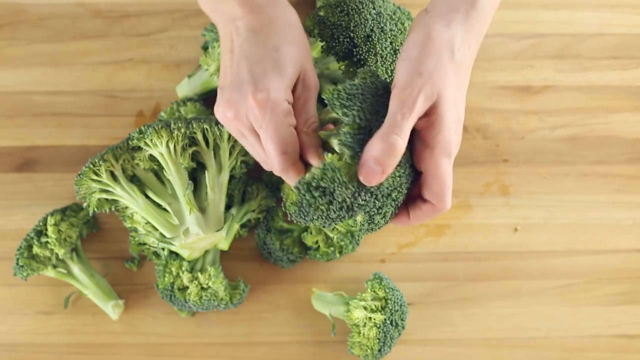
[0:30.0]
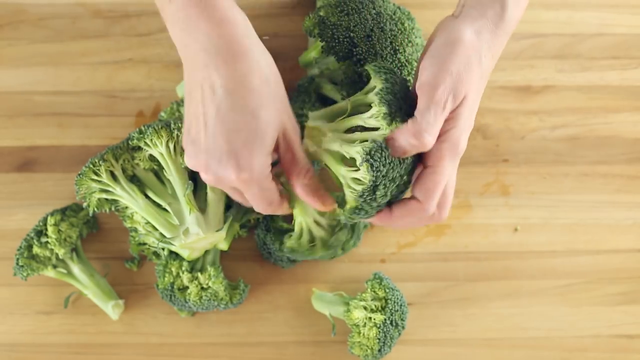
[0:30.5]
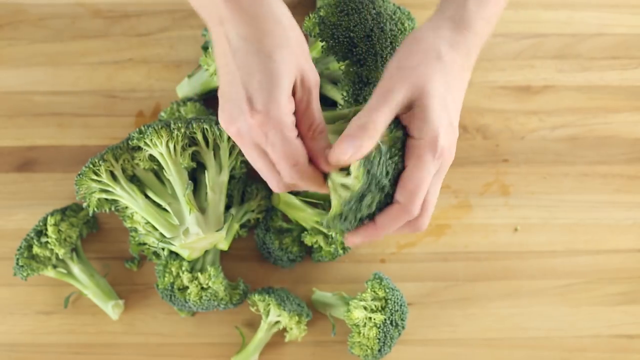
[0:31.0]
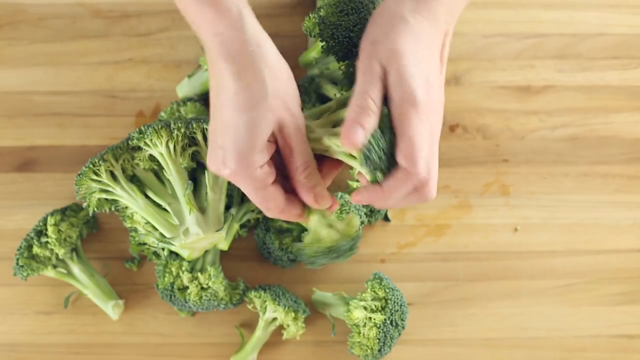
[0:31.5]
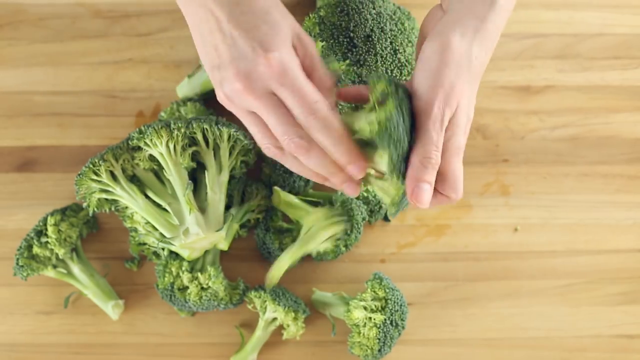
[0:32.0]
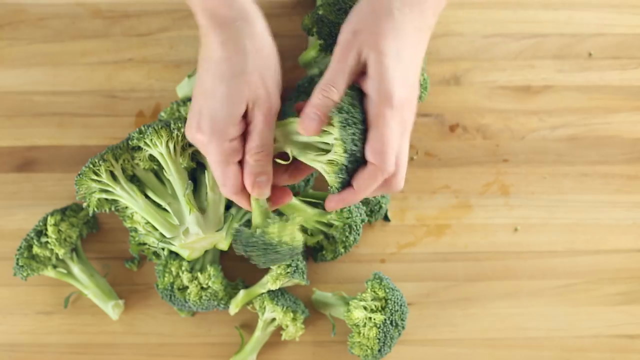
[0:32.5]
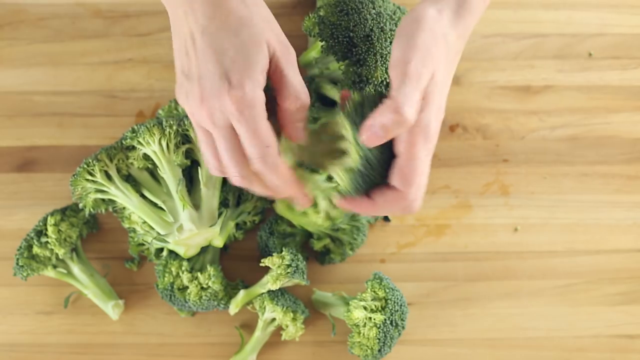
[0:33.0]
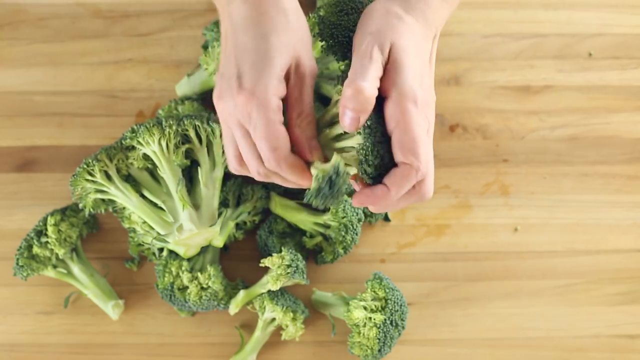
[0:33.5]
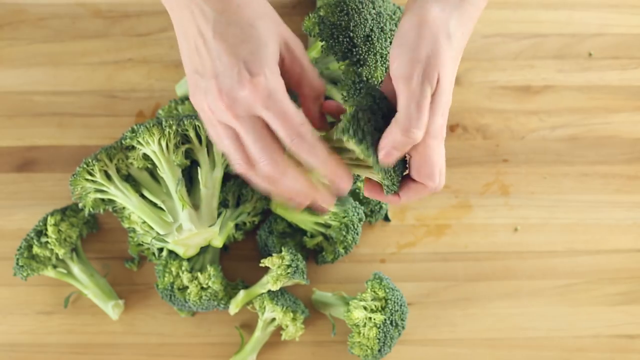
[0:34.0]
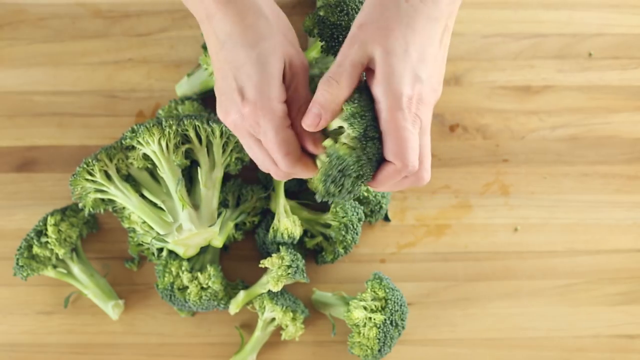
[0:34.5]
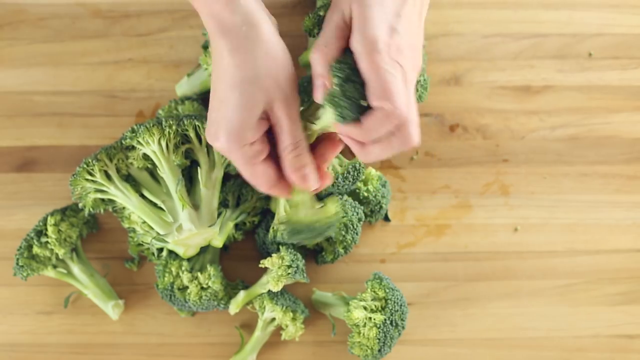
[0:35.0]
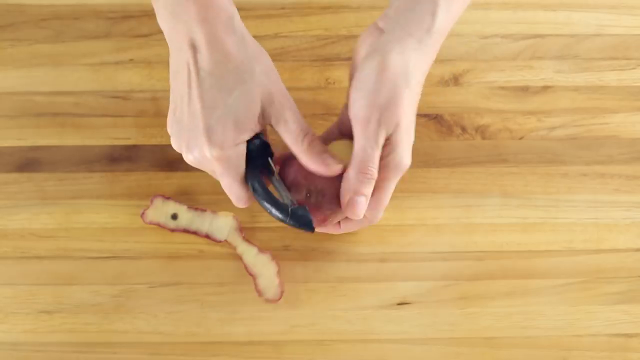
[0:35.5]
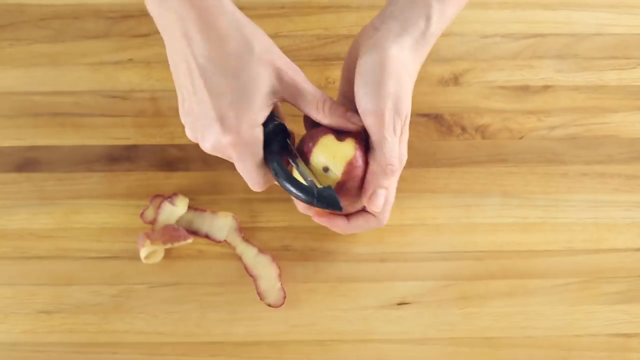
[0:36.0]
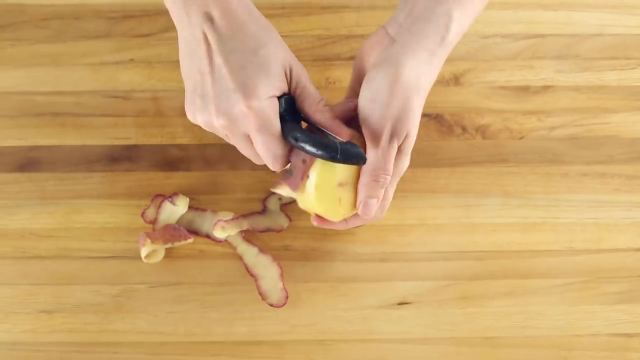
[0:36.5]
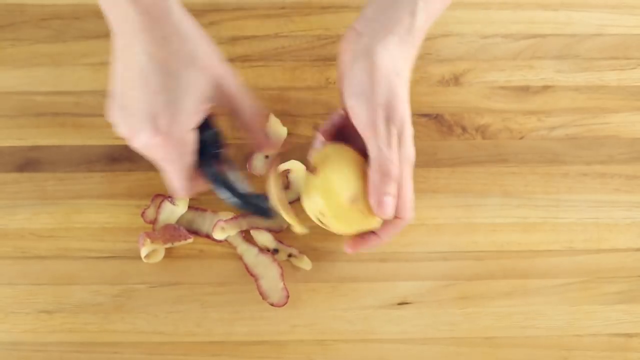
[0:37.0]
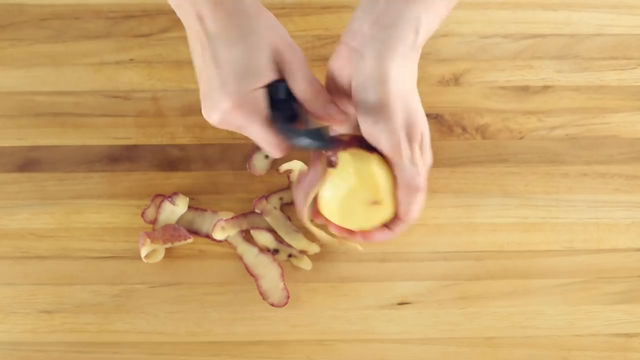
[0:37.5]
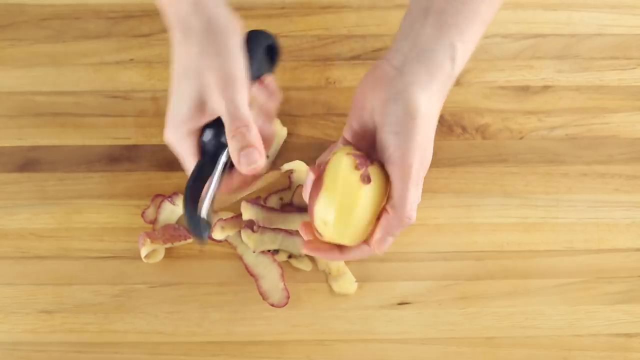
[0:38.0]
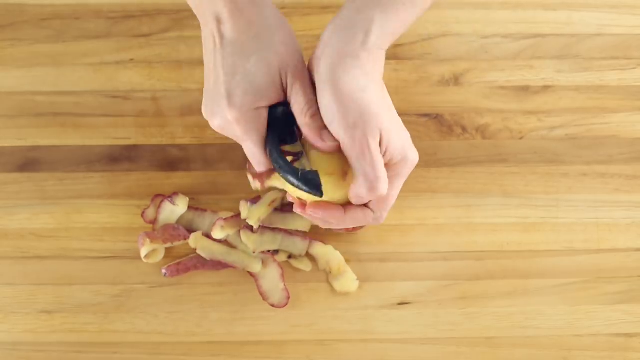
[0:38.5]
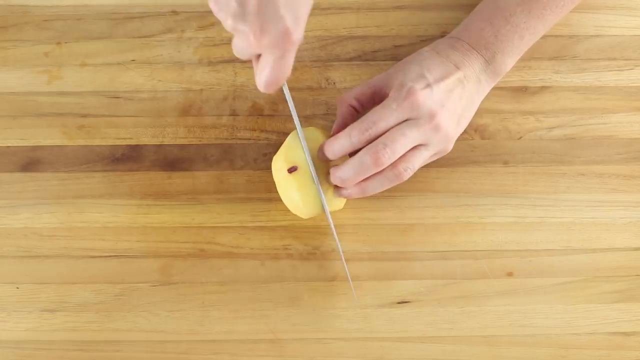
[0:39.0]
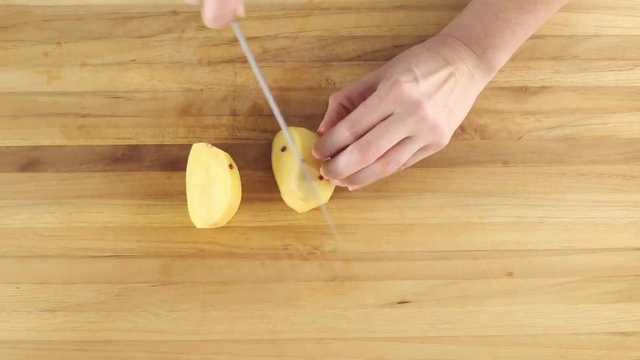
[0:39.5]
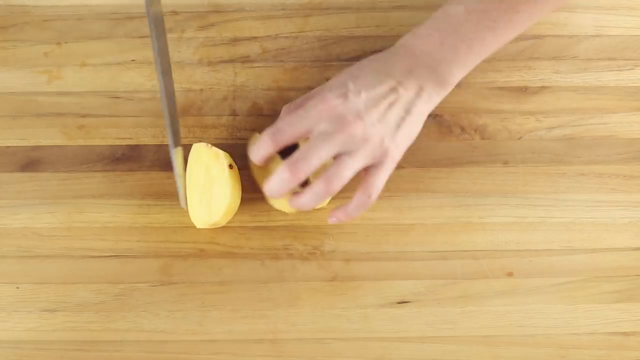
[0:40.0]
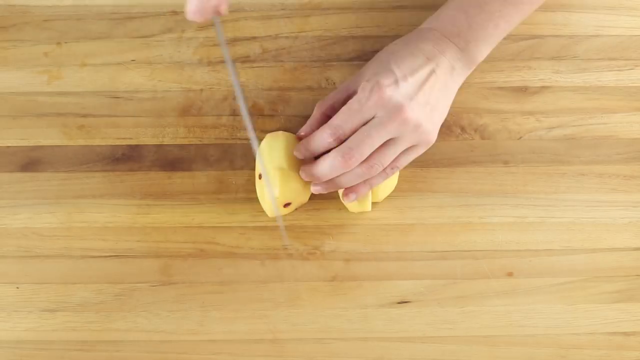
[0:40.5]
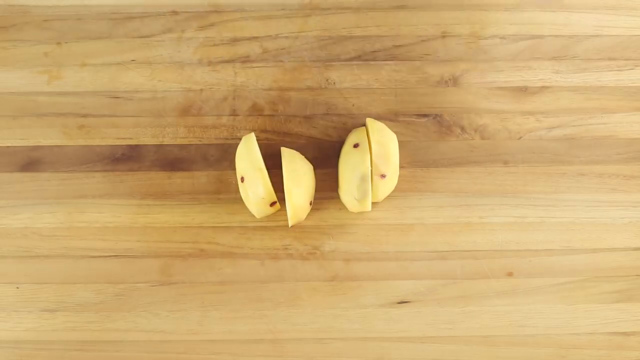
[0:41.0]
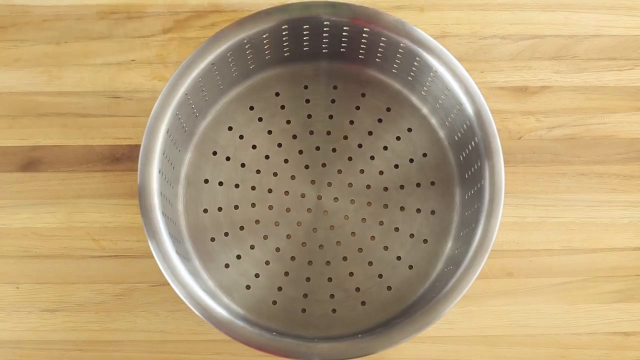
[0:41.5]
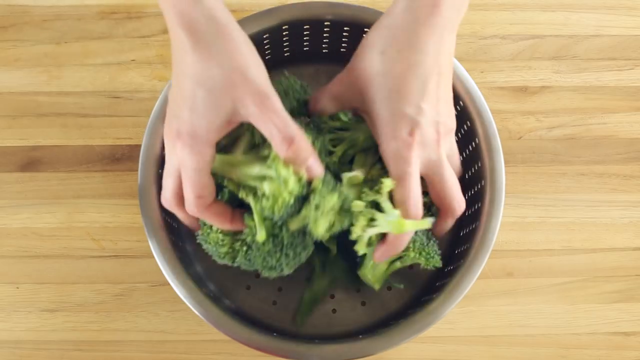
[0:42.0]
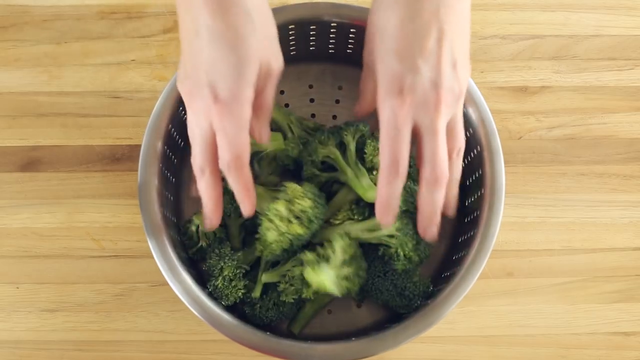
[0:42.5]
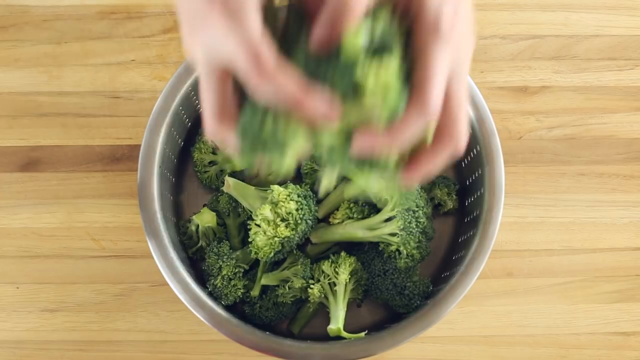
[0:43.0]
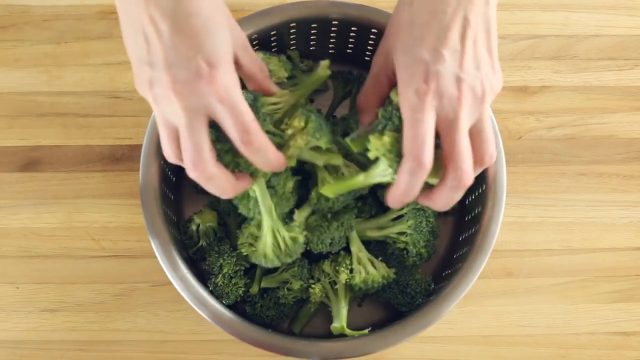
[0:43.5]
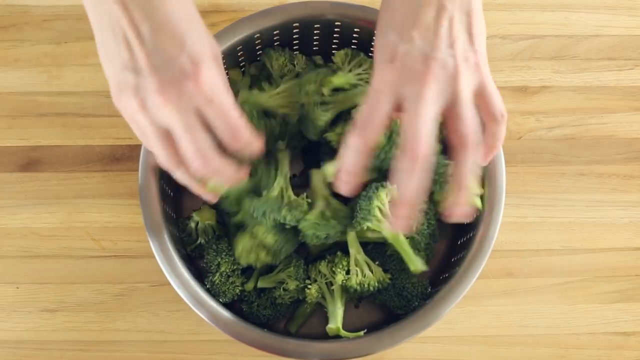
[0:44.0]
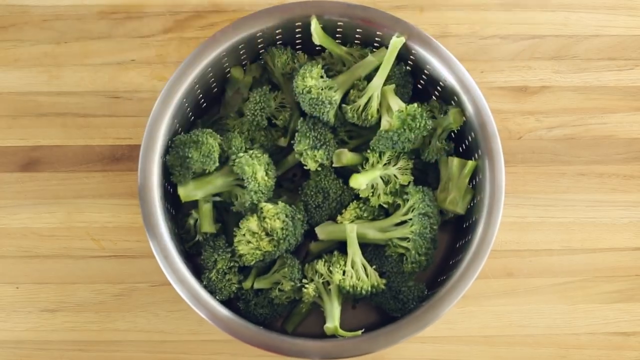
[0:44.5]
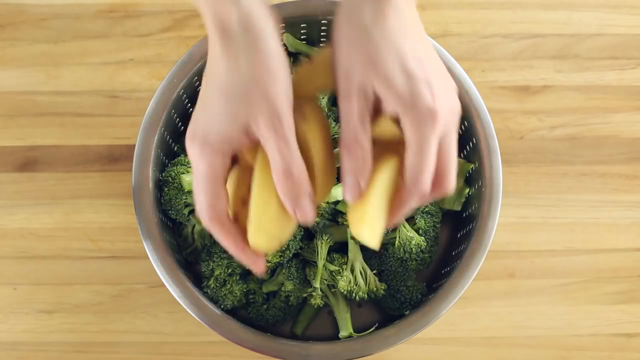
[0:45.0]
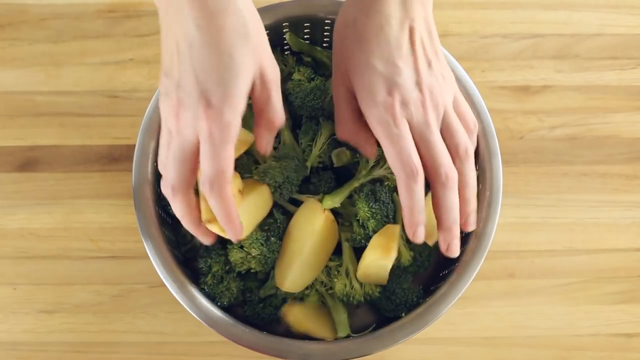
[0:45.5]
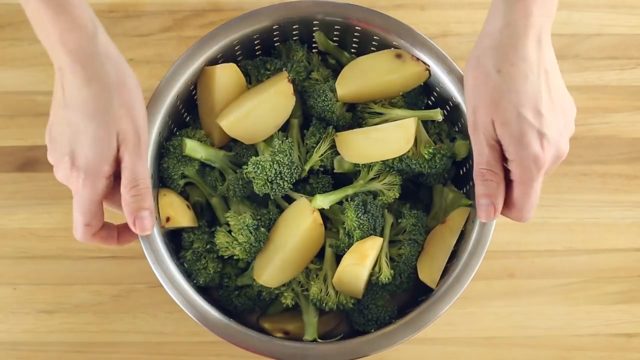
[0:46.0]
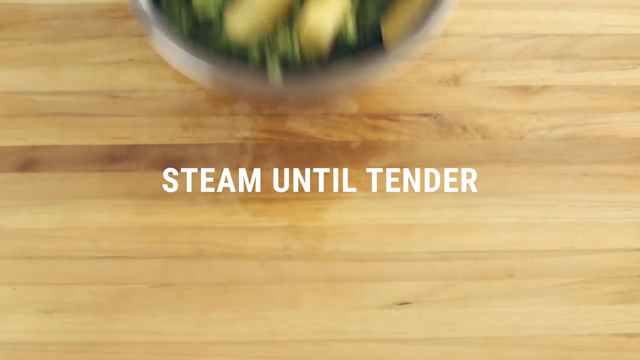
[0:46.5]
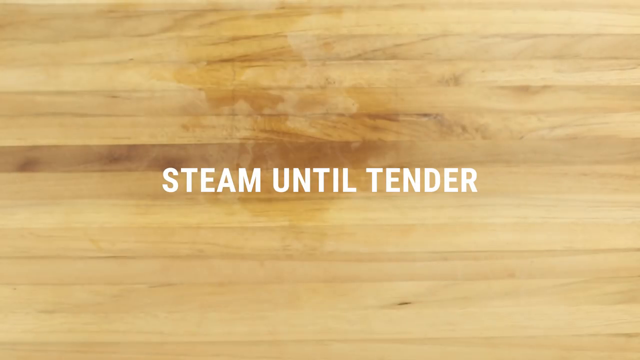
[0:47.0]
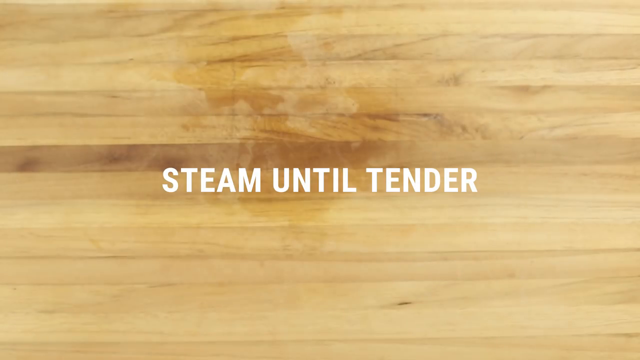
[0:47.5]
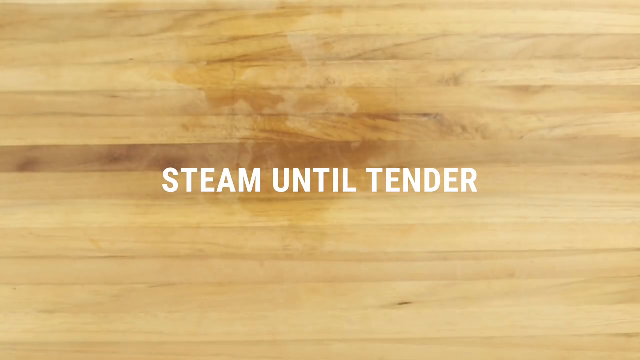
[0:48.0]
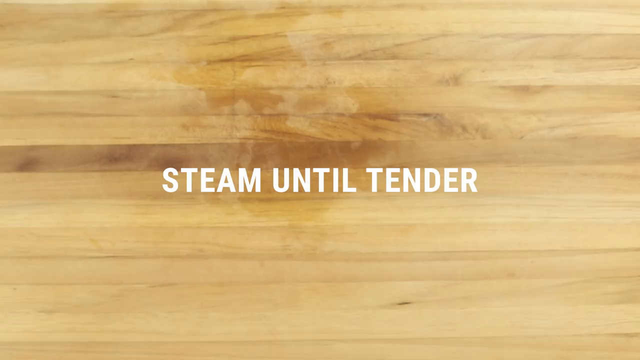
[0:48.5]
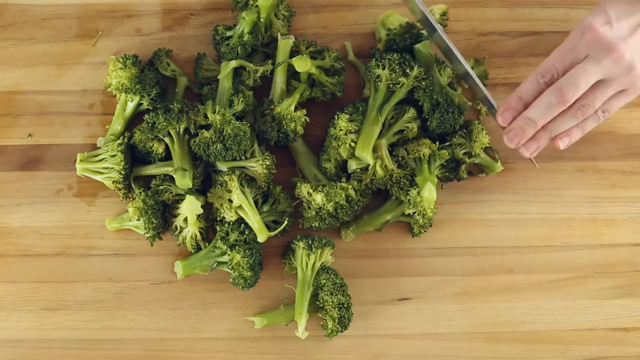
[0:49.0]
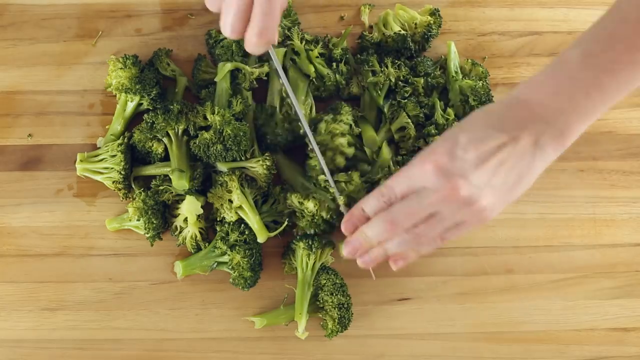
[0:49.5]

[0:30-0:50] On a light brown wooden tabletop with a few large chunks of broccoli, a pair of hands breaks the broccoli into smaller pieces and sets the pieces down on the table. A close-up then shows them peeling a reddish-brown potato with a black handheld peeler; the video is kind of sped up, so they appear to move very fast. The brownish-red peels drop onto the table, revealing the yellow potato underneath. They put the peeled potato on its side and cut it down the middle with a knife into two halves, then turn the halves over and cut each down the middle, making four pieces. They put a large silver strainer bowl on the table and drop the broken-down broccoli pieces into it, one large handful and then another placed on top, followed by a few pieces of the cut potato. They grab the bowl by the left and right sides of its top brim and move it off the table, and white text appears on the table reading "Steam until tender." In the next scene, what looks like the steamed broccoli is laid out on the table, and a close-up shows a pair of hands holding a large silver knife, quickly chopping it.